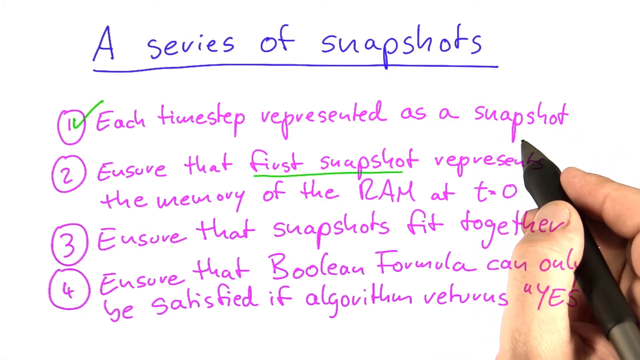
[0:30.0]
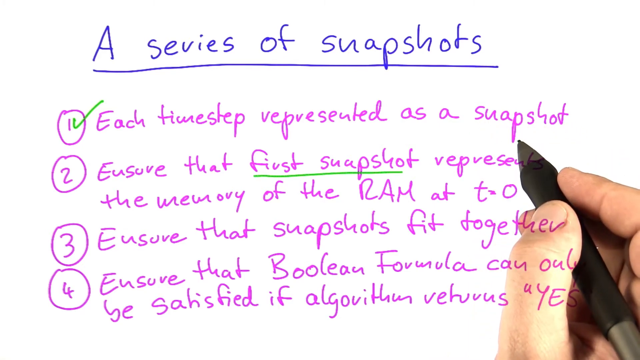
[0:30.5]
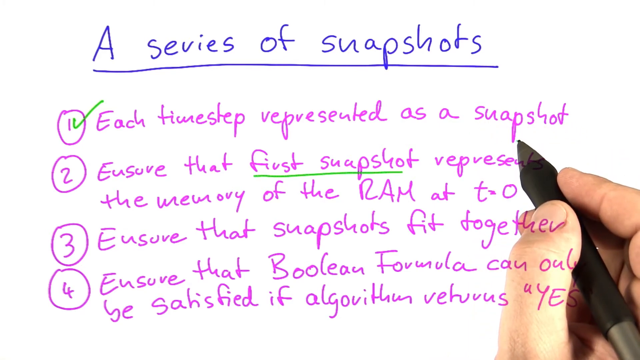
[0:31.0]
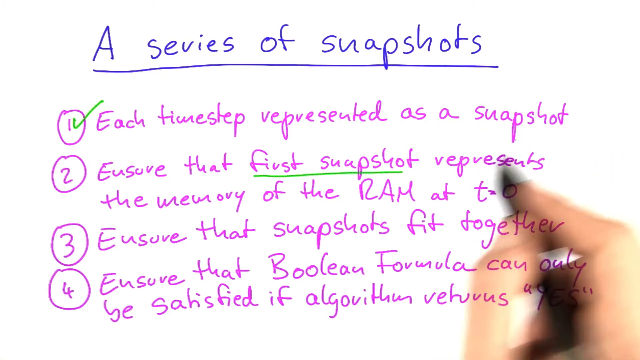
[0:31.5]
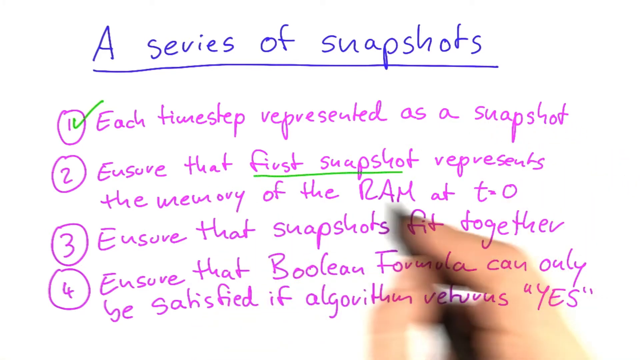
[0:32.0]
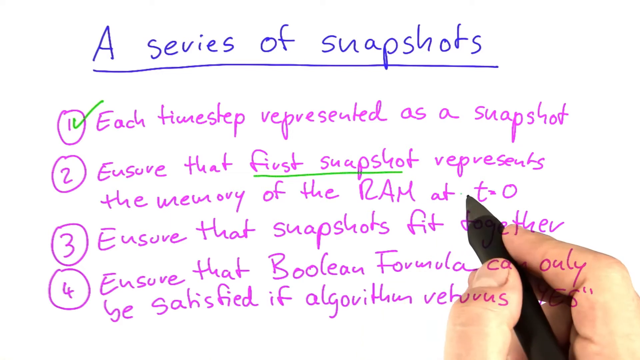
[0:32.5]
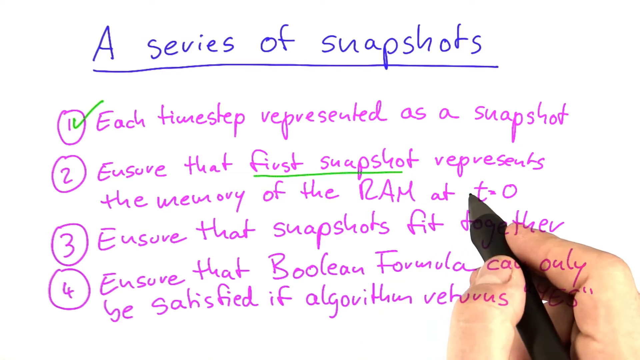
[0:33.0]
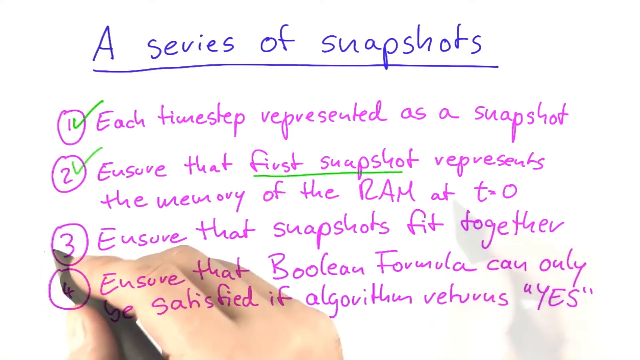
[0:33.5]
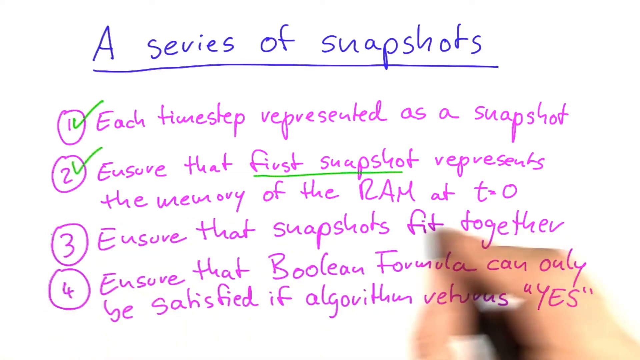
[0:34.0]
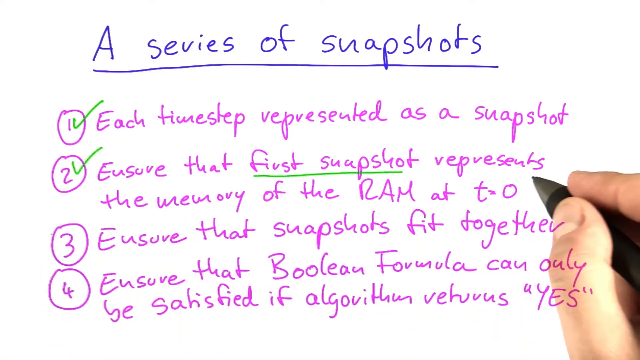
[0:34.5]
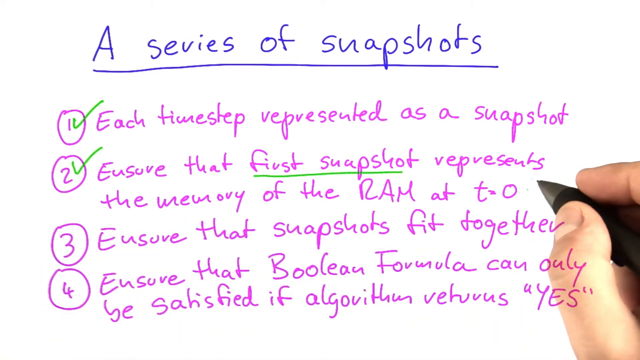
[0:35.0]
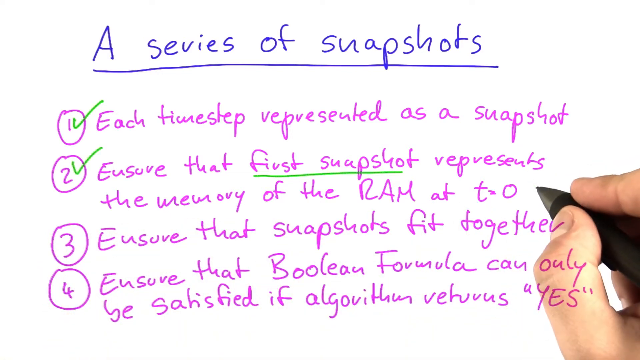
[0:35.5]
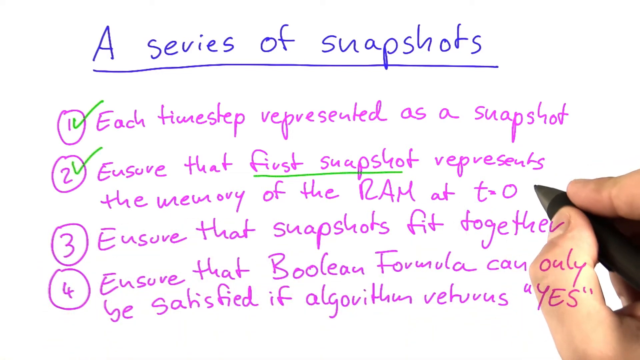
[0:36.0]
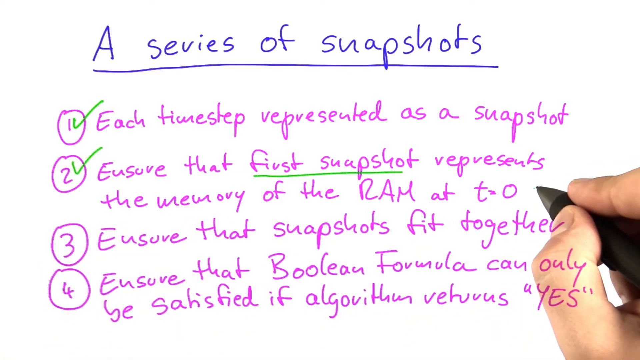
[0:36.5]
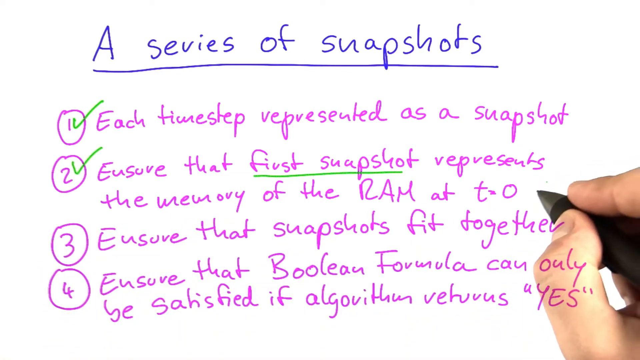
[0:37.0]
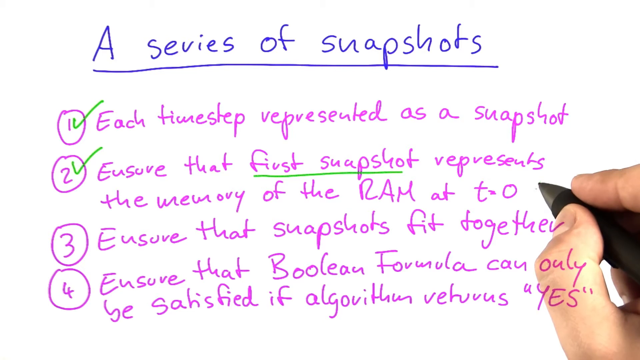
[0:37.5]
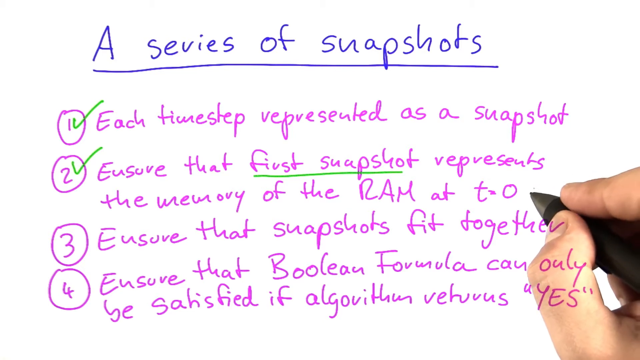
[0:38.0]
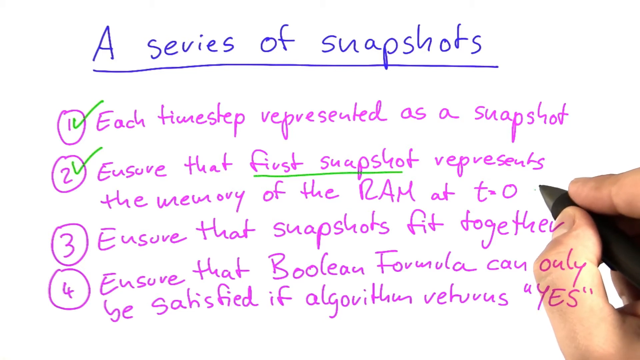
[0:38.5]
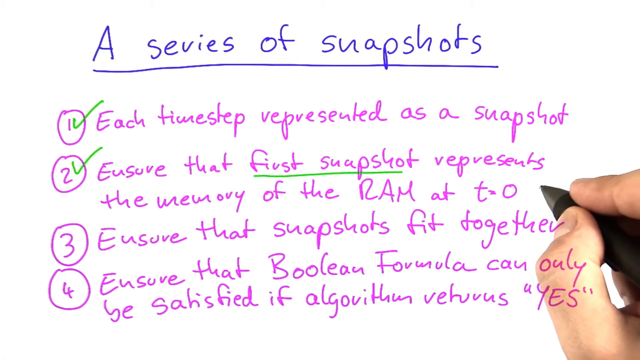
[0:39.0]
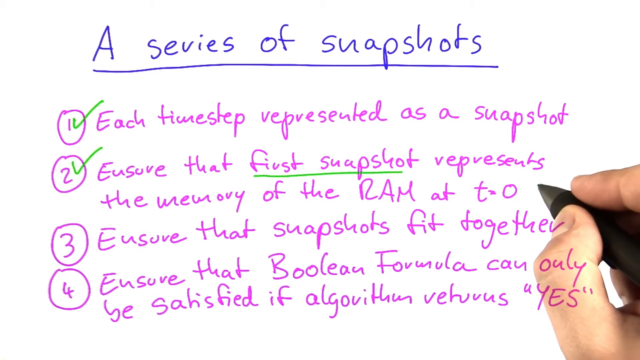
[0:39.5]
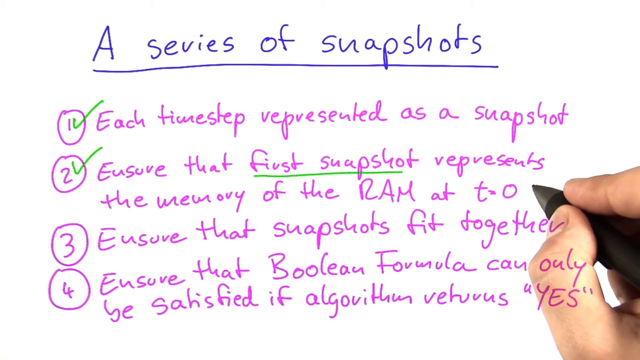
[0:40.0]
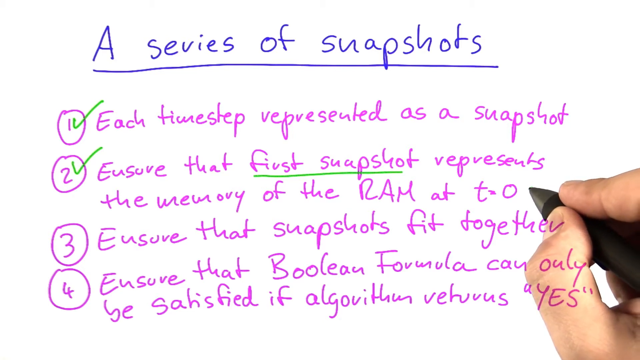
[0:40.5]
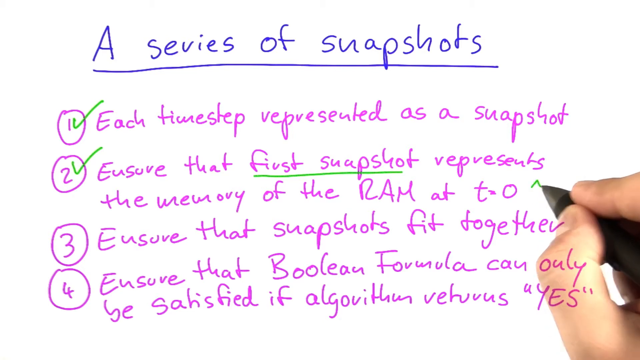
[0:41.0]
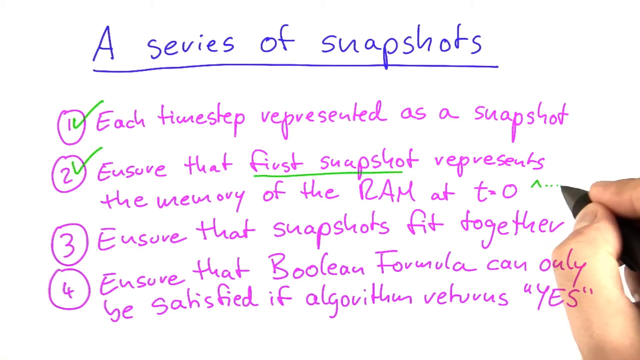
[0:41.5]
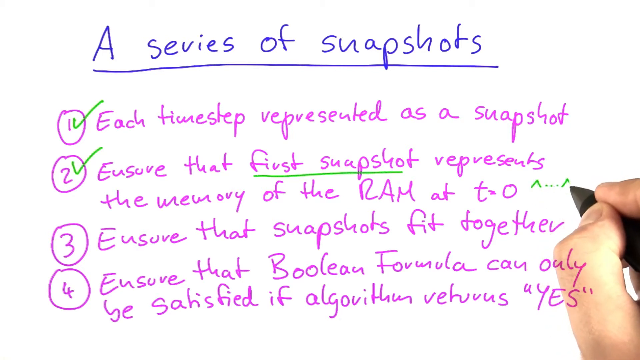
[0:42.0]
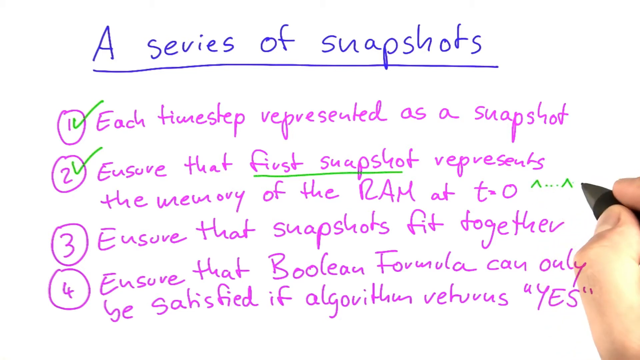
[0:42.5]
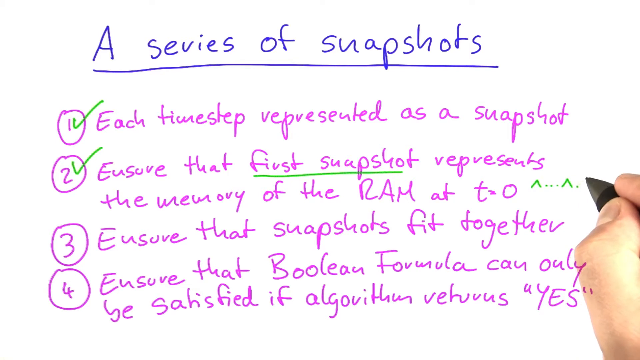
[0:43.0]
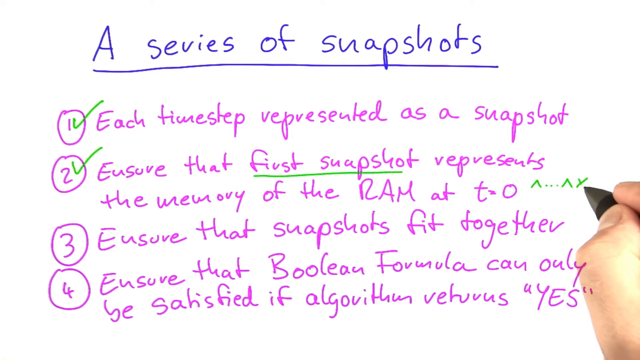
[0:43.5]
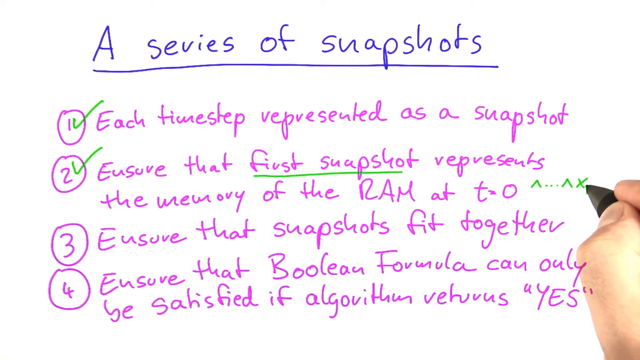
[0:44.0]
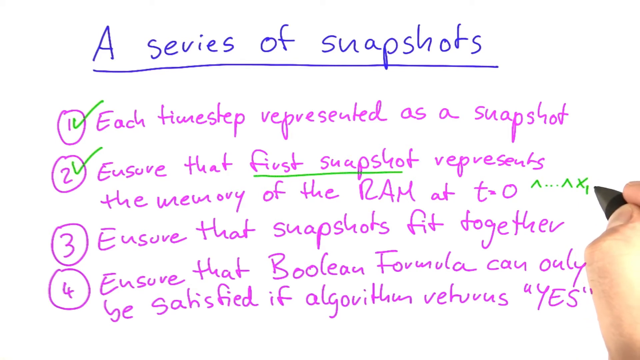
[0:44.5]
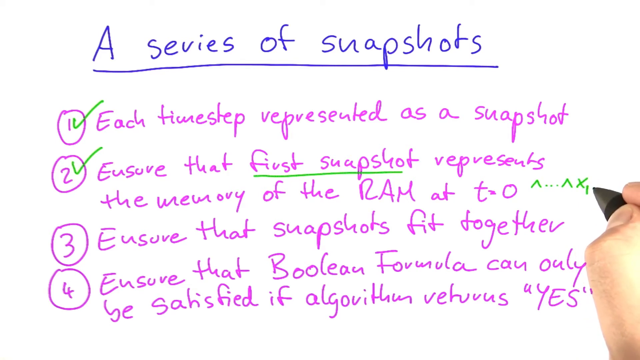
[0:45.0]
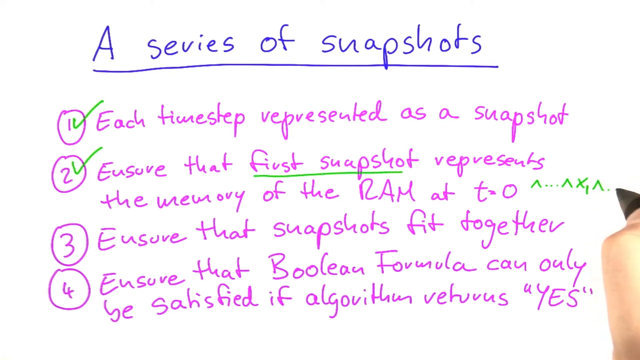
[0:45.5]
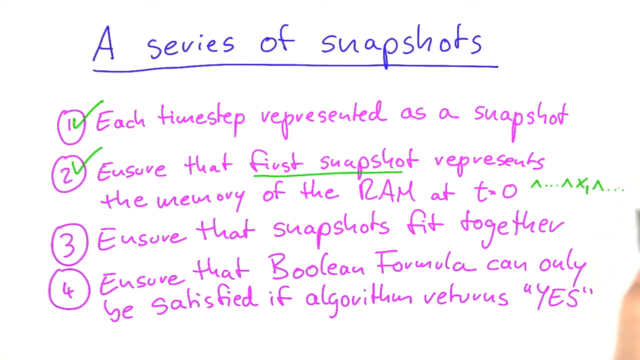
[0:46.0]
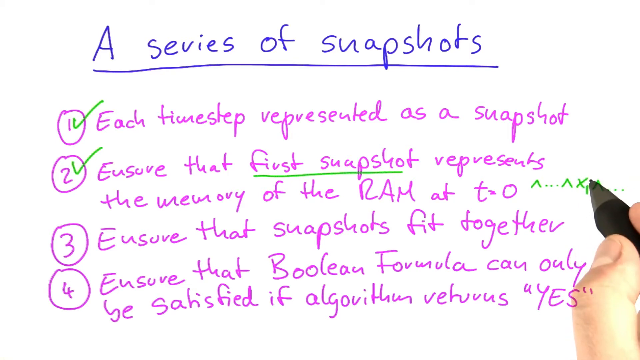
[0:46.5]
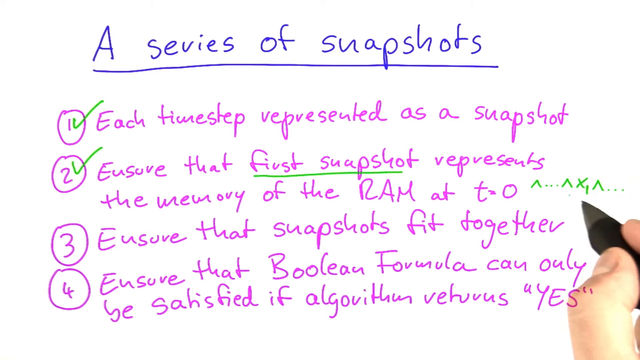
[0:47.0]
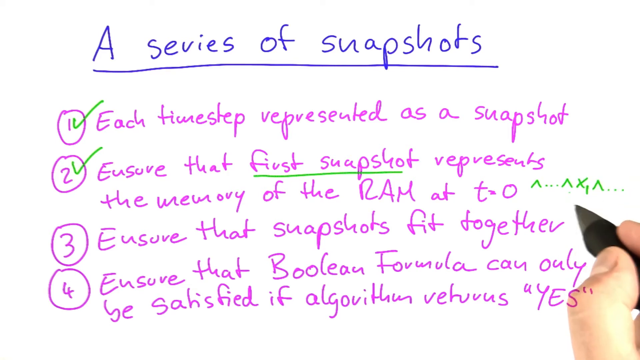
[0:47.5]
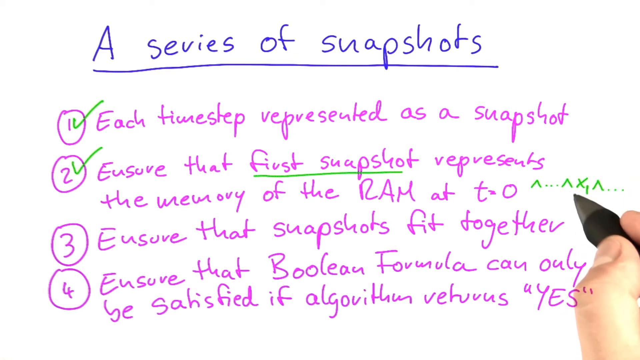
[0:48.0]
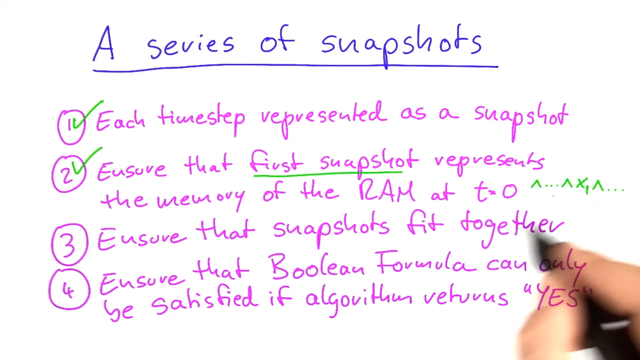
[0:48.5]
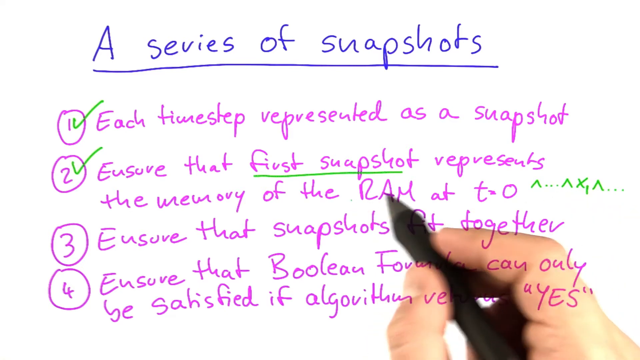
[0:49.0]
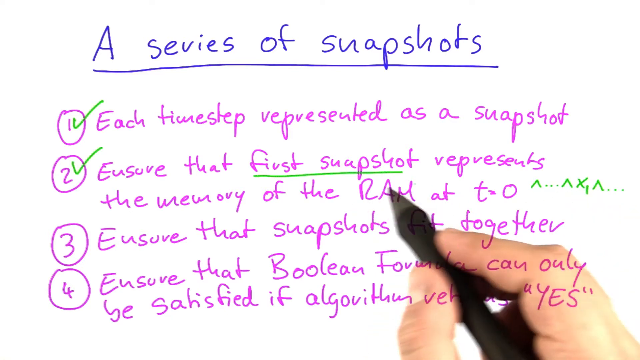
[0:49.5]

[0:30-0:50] A hand and the written sentences are visible, and the quality is very high. Two sentences are now ticked in green, where before only one was ticked, and the person underlines a word in sentence number two. The sentences are still written in pink and the topic in blue. The person holds a black pen in his right hand, yet the writing is not black; instead blue, green and pink are used for the four sentences on a white background. He appears to be using a computer.